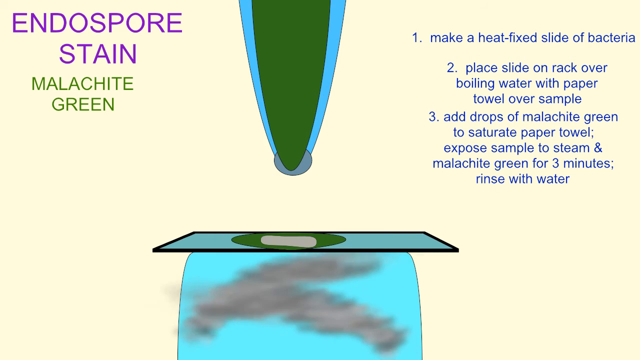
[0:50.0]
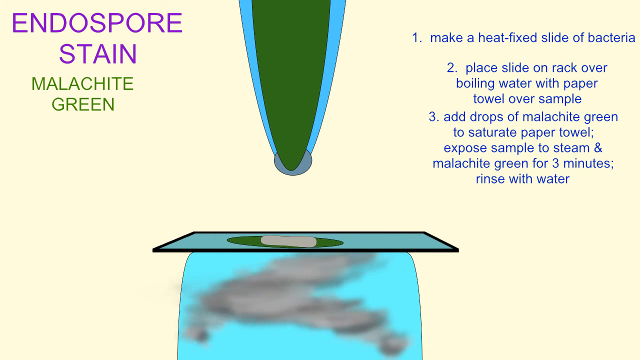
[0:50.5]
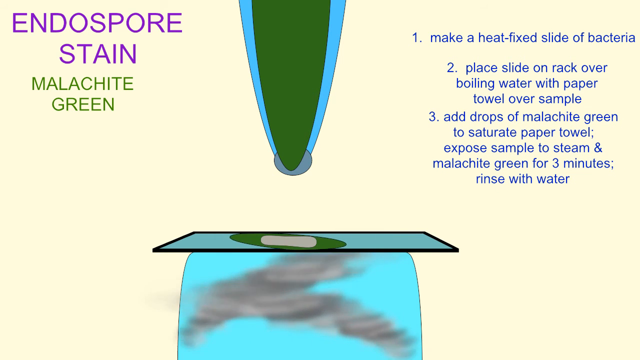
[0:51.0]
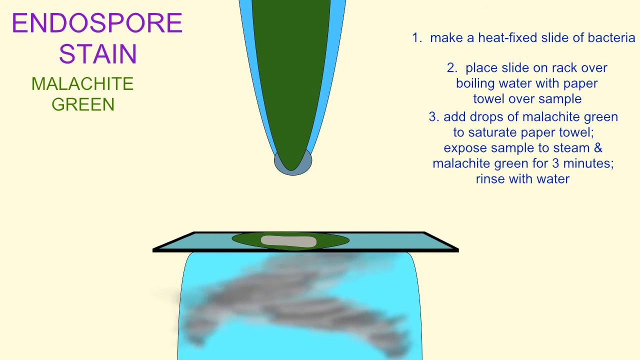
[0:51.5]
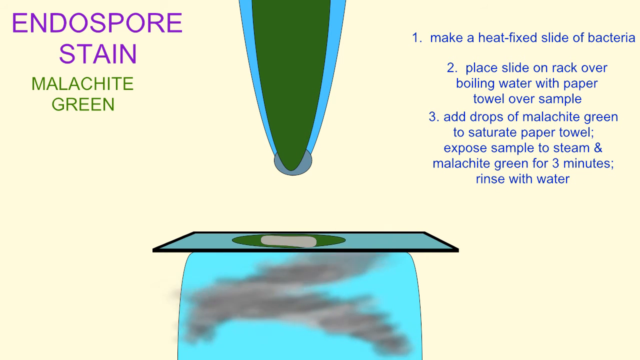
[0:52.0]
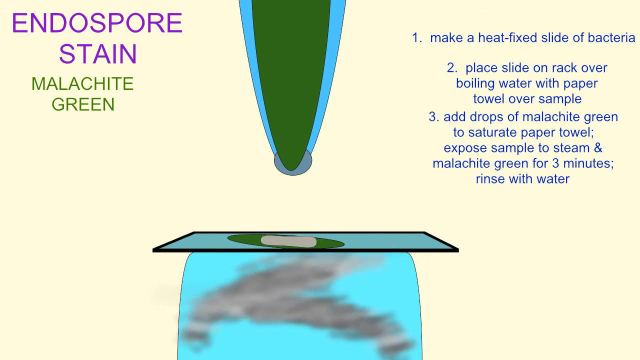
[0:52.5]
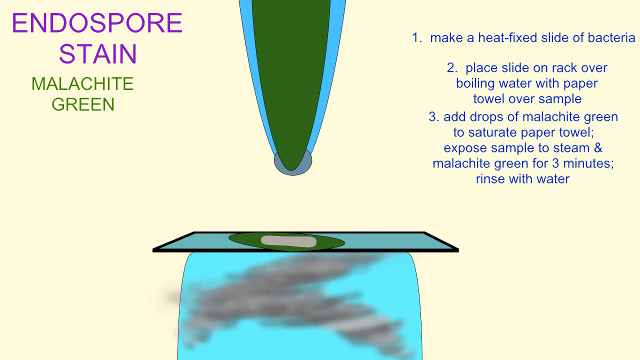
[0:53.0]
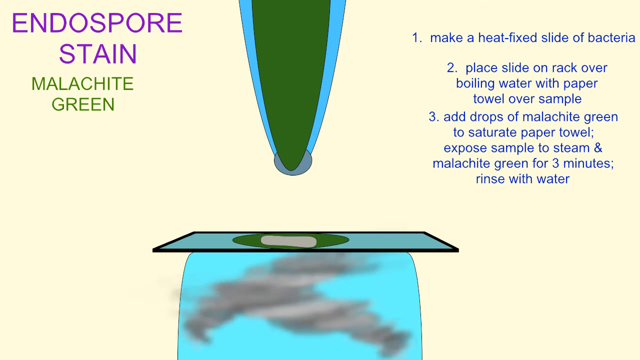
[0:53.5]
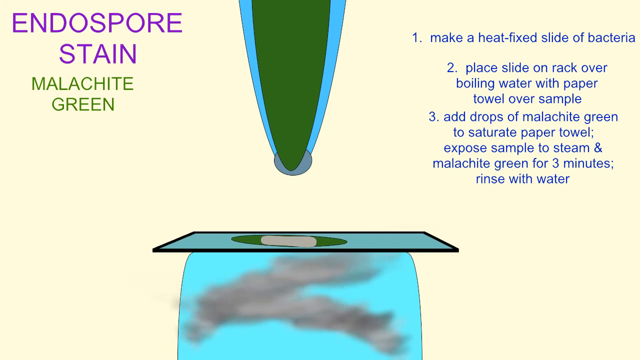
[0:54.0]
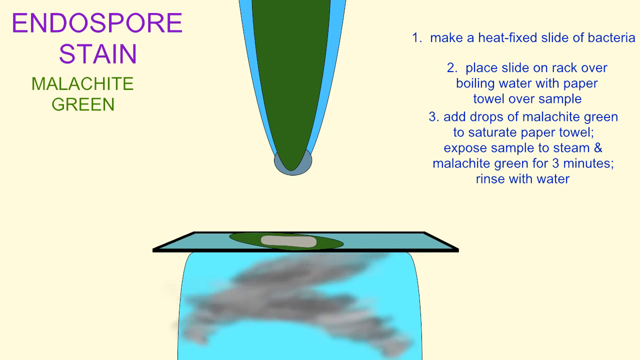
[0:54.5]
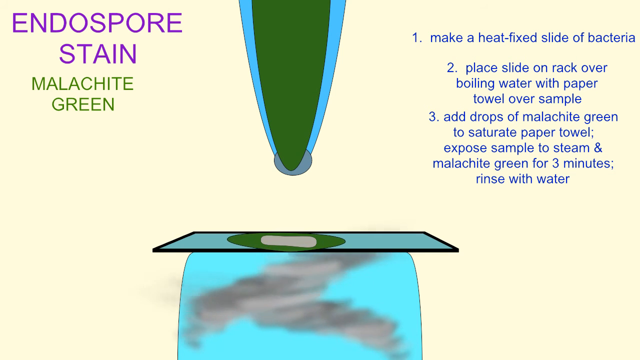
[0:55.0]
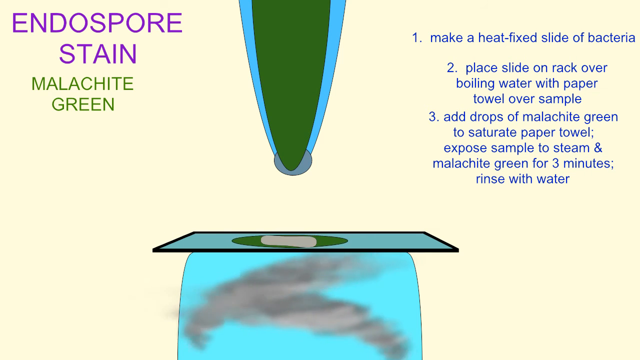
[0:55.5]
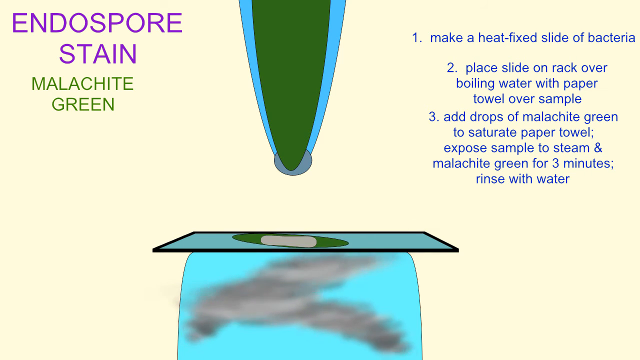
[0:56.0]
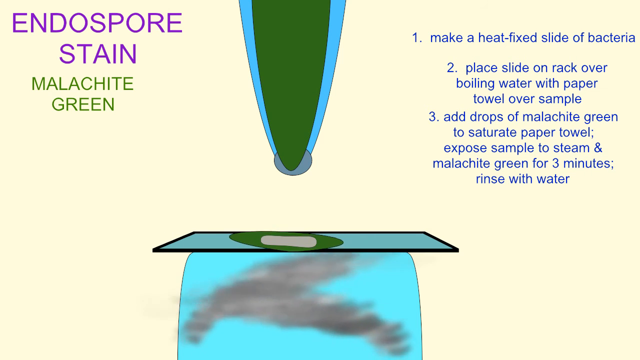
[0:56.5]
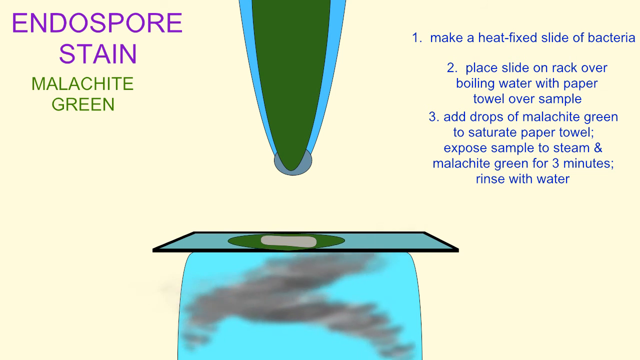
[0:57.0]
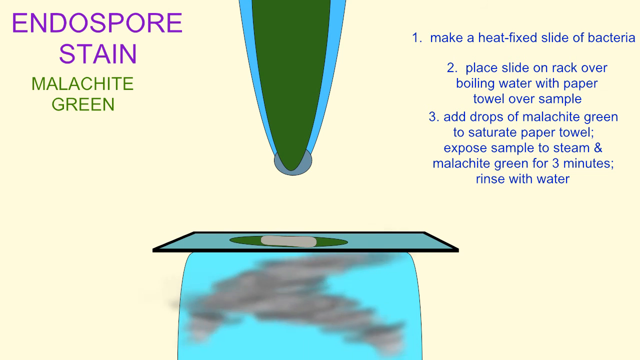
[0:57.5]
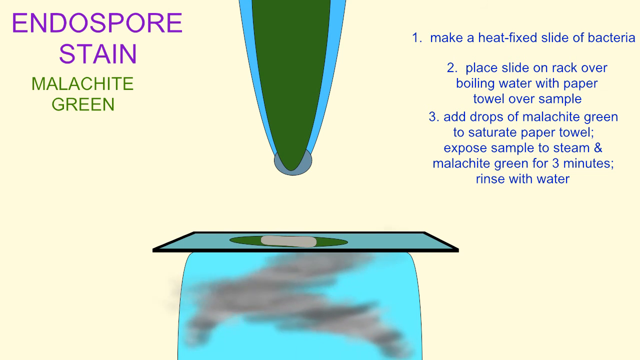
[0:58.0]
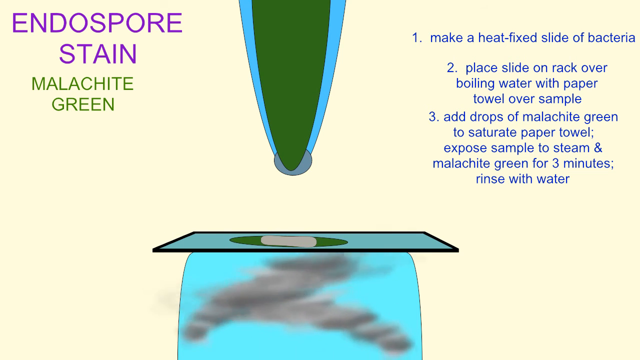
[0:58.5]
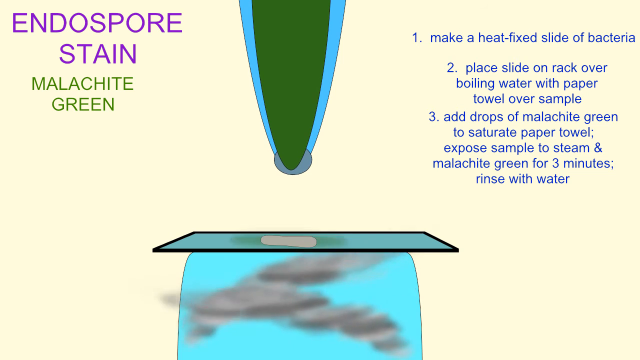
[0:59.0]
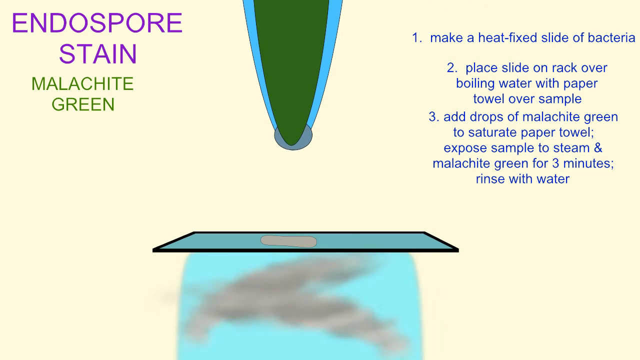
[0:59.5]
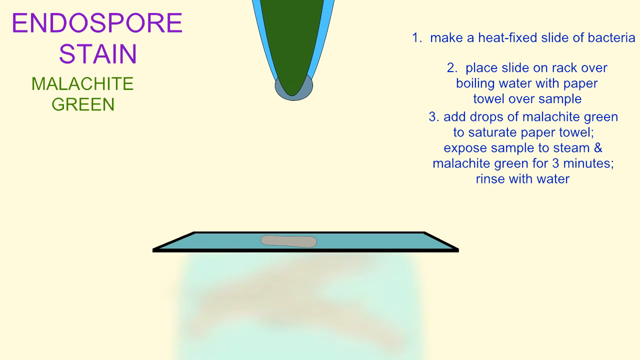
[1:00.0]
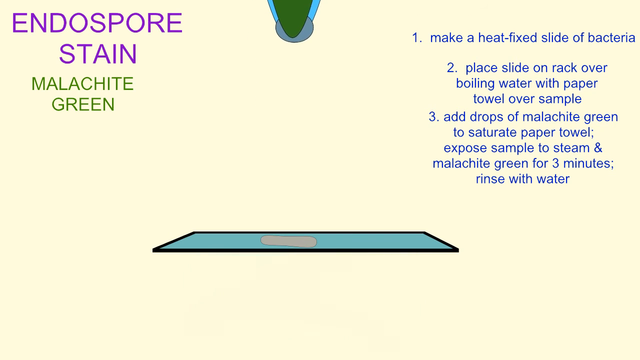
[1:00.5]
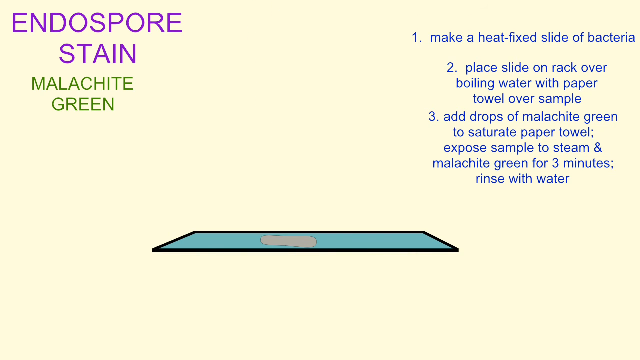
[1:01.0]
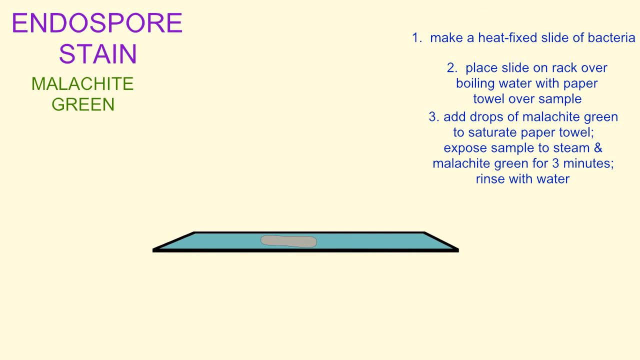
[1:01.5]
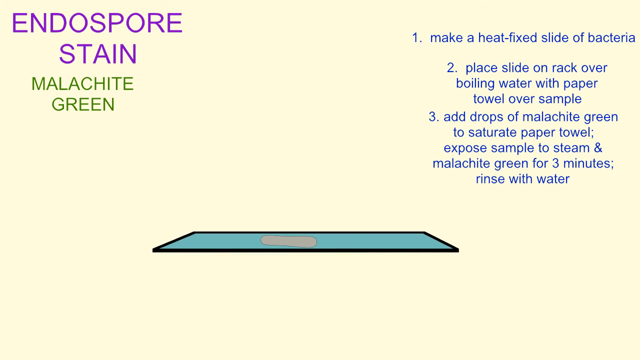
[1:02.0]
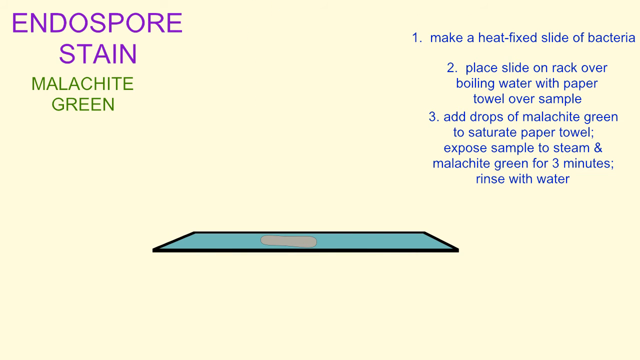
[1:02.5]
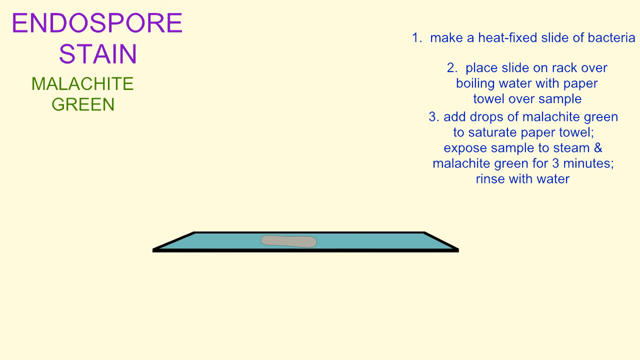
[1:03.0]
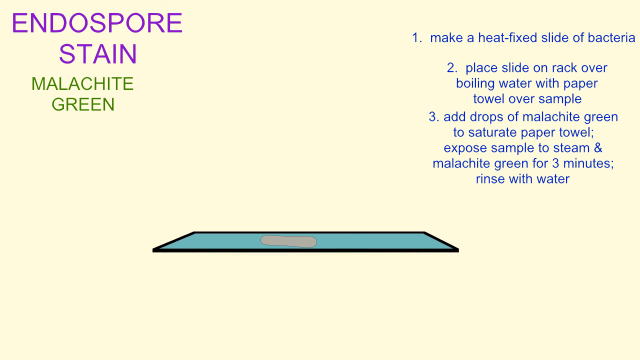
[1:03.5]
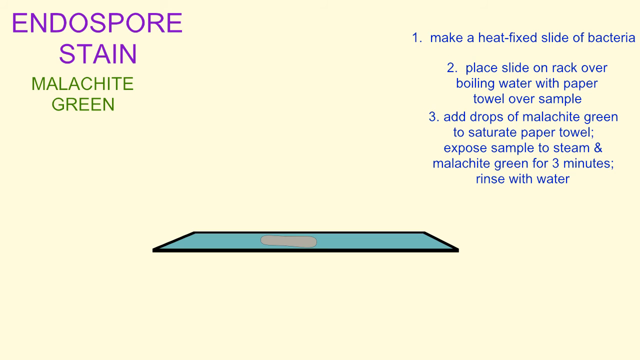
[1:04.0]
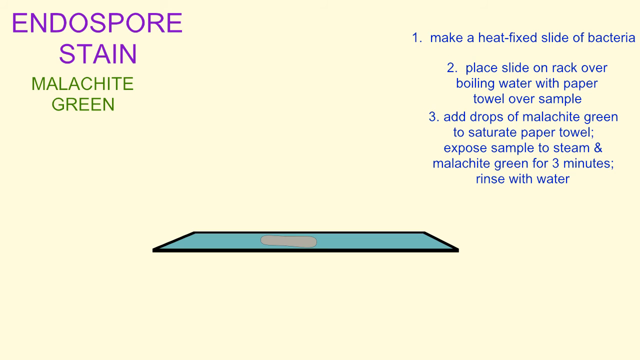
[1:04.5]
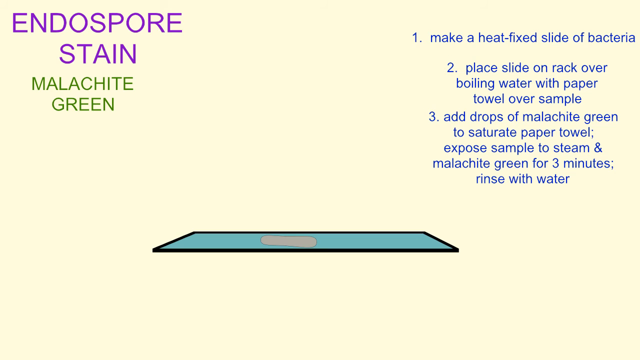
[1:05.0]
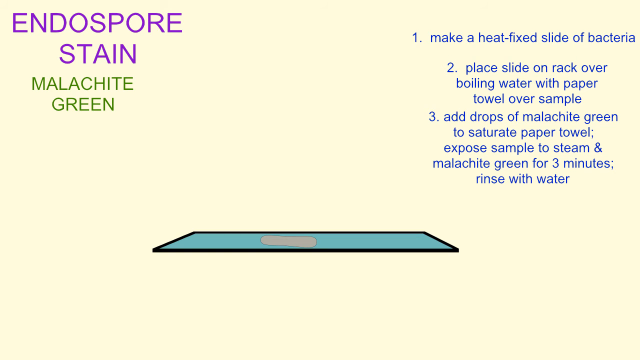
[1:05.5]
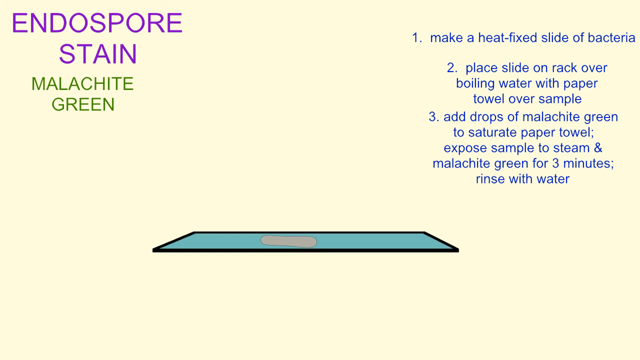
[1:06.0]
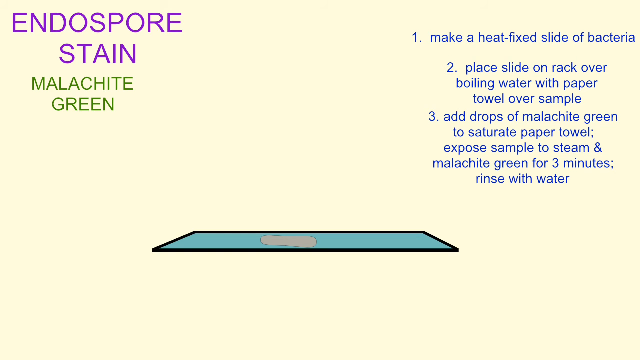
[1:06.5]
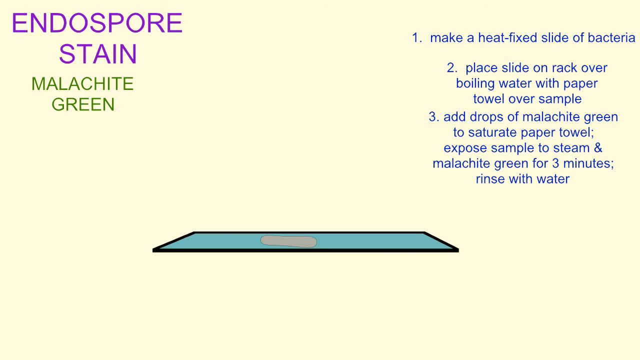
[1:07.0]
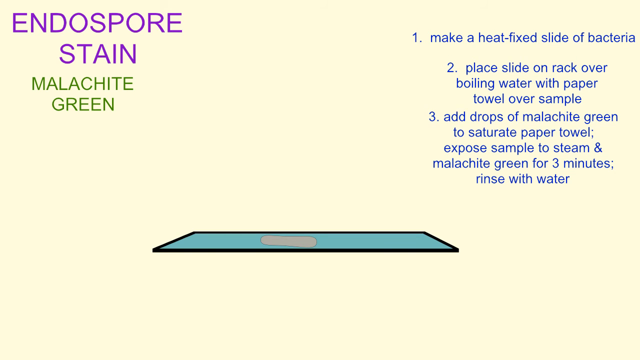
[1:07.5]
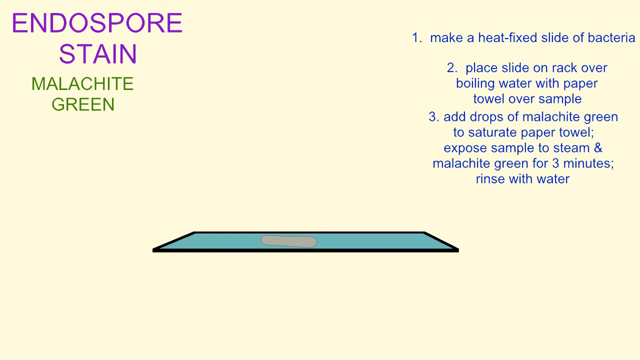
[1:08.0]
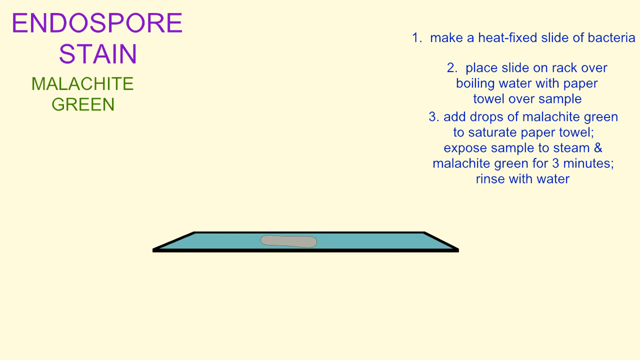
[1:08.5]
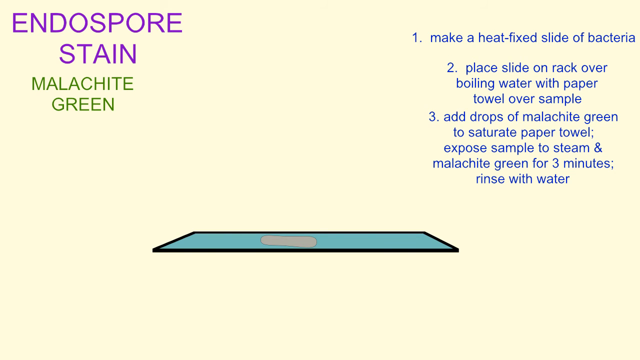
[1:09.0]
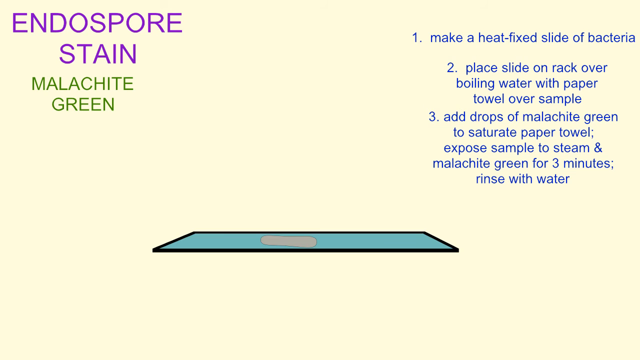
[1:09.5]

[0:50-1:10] Dark gray to medium gray smoke swirls around underneath the heat-fixed slide of bacteria. The malachite green object that had come down goes back up, and the smoke disappears until only the slide and the gray object on it are visible. In the upper left corner, the words "endospore stain" remain in purple font in all uppercase letters, with "malachite green" underneath, also in all uppercase letters. On the right, the steps remain: "make a heat-fixed slide of bacteria," "place slide on rack over boiling water with paper towel over sample," and number three, "add drops of malachite green to saturate paper towel, expose sample to steam, and malachite green for three minutes, rinse with water."